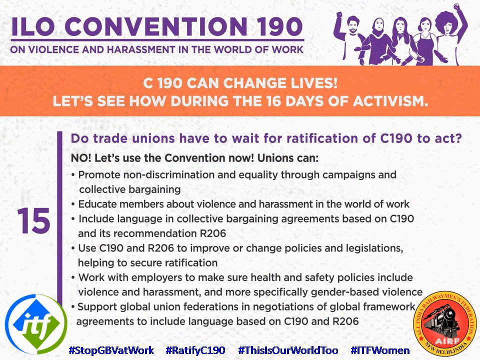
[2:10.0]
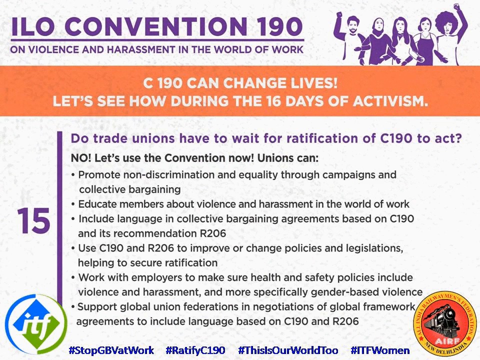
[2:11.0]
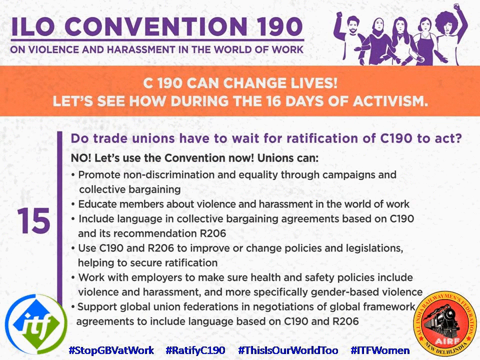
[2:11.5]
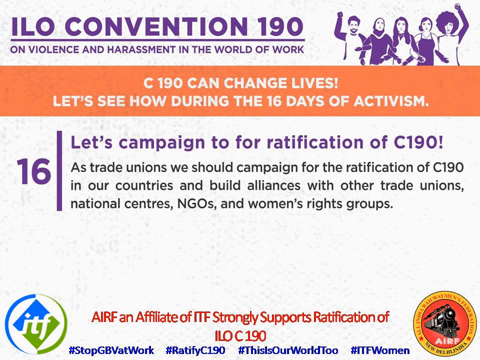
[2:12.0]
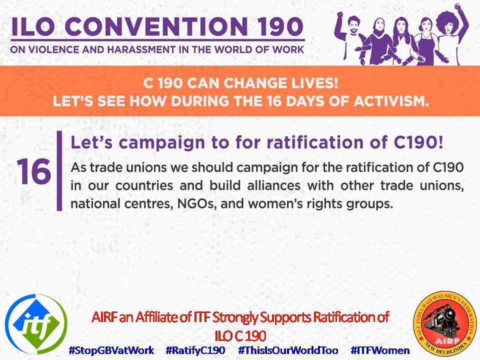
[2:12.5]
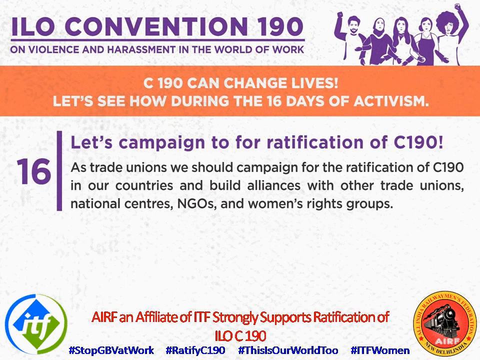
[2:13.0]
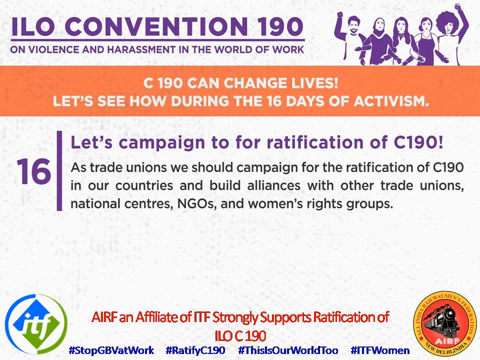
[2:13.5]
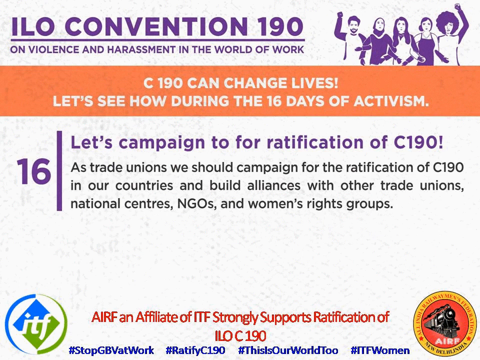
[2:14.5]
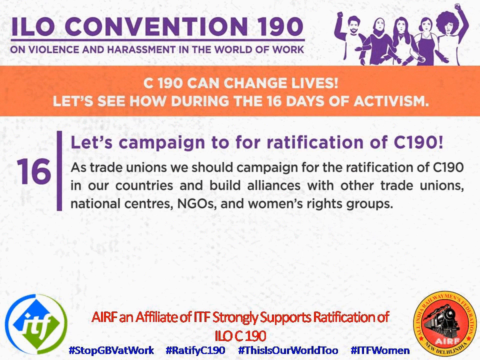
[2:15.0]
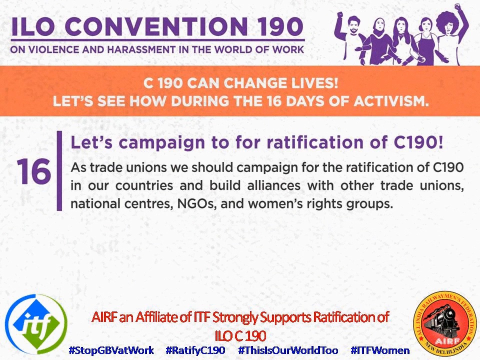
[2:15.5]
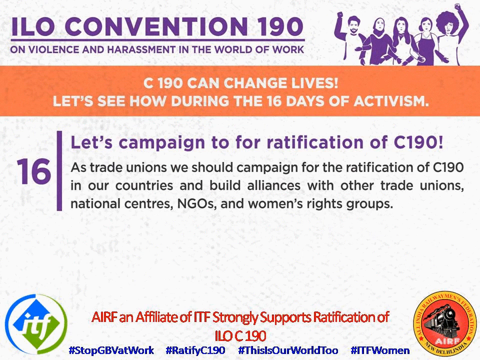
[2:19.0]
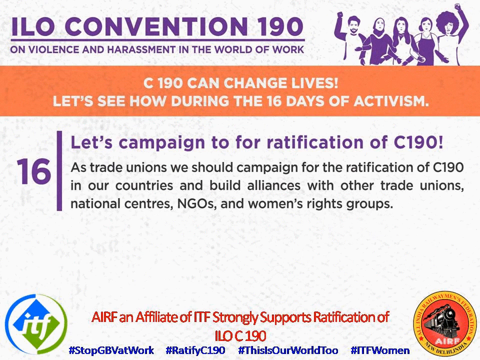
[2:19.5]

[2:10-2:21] Section 15 has a purple 15 on the left and purple text on the right: "Do trade unions have to wait for ratification of C-190 to act?" Black text beneath says "No. Let's use the convention now. Unions can promote non-discrimination and equality through campaigns and collective bargaining. Educate members about violence and harassment in the world of work. Include language and collective bargaining agreements based on C-190 and its recommendation R-206. Use C-190 and R-206 to improve or change policies and legislations helping to secure ratification. Work with employers to make health and safety policies include violence and harassment and more specifically gender-based violence. Support global union federations in negotiations of global framework agreements to include language based on C-190 and R-206." Section 16 follows, with a purple 16 on the left and, at the top right, purple text: "Let's campaign to for ratification of C-190." Black text beneath says "As trade unions we should campaign for the ratification of C-190 in our countries and build alliances with other trade unions, national centers, NGOs, and women's rights groups." A large open white space follows, then red text: "AIRF, an affiliate of ITF, strongly supports ratification of ILO C-190." Round emblems are on either side of it: the left one is circular, blue and green with white; the right one is circular with a yellow outer ring with red lettering and a red center containing a drawn train engine illustration. At the top, purple lettering says "ILO Convention 190", with "on violence and harassment in the world of work" underneath. At the very top right is a drawing of five individuals, four females and one male, all in purple and shown from the waist up. The people on either end raise one arm in the air in a fist, and their other arms are linked with the person next to them, forming a human chain. They face the viewer with very determined expressions.